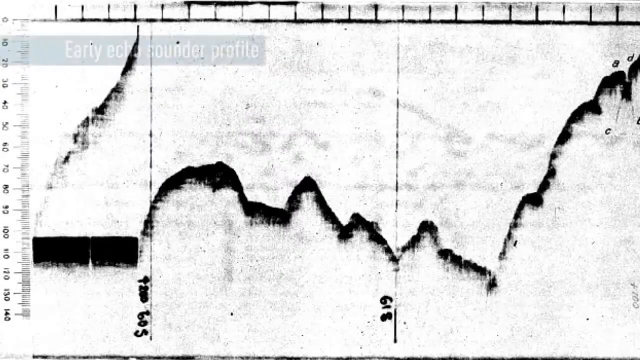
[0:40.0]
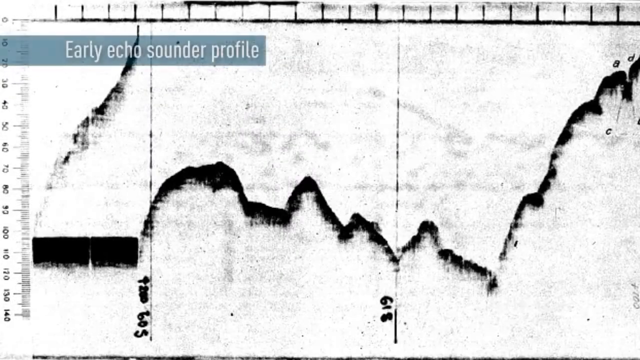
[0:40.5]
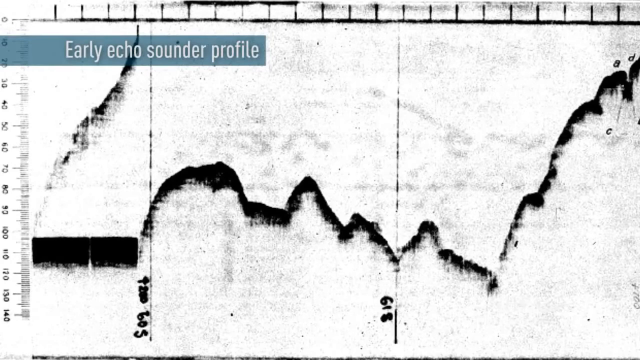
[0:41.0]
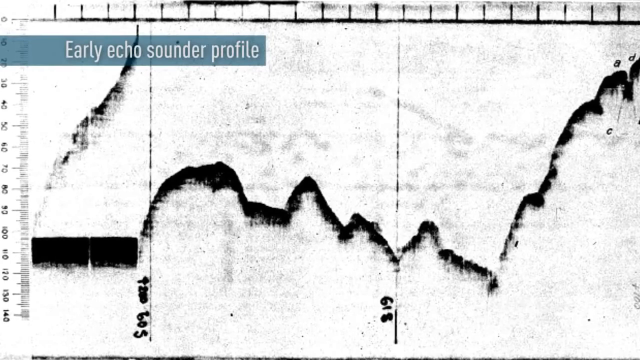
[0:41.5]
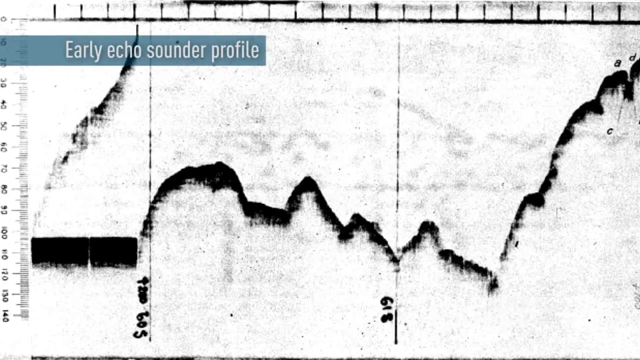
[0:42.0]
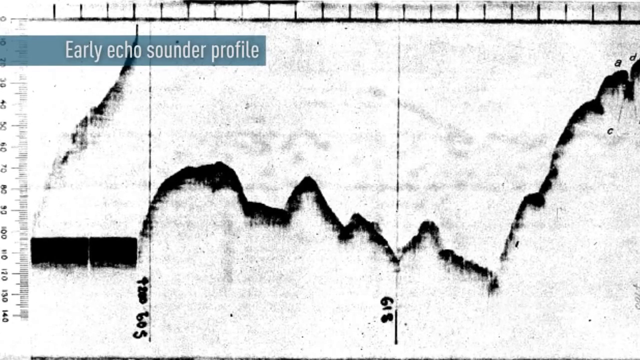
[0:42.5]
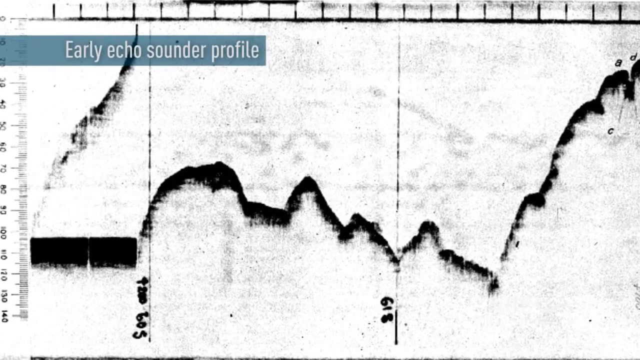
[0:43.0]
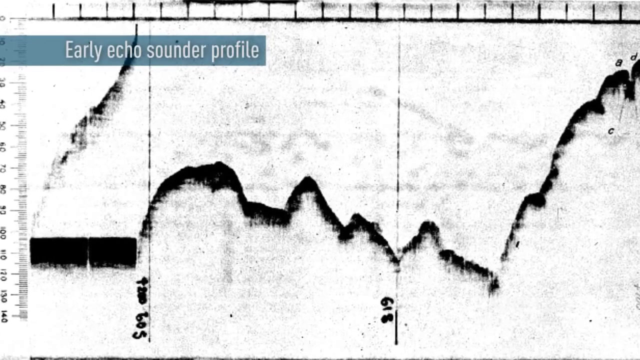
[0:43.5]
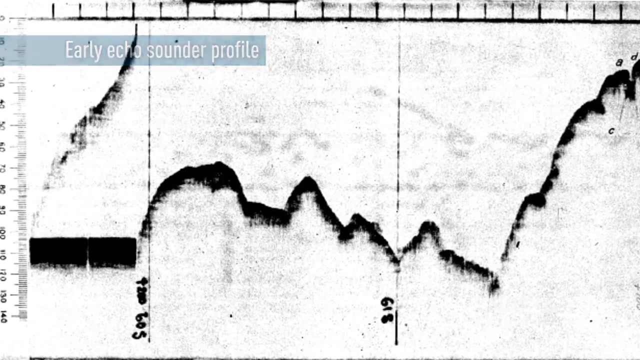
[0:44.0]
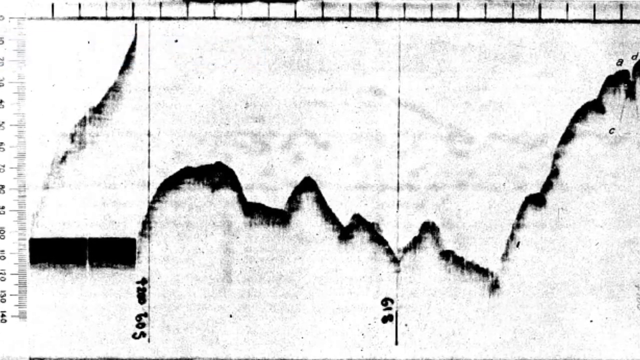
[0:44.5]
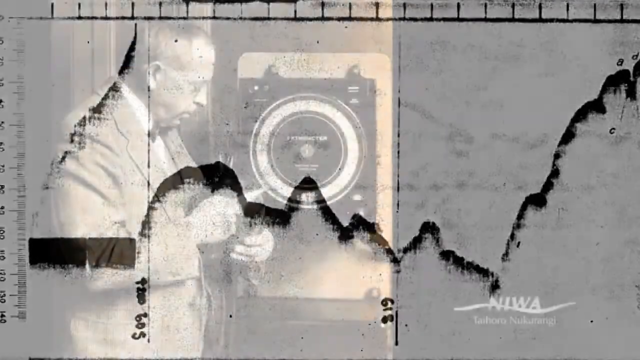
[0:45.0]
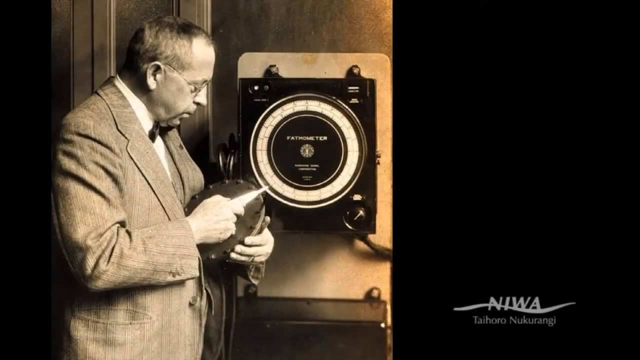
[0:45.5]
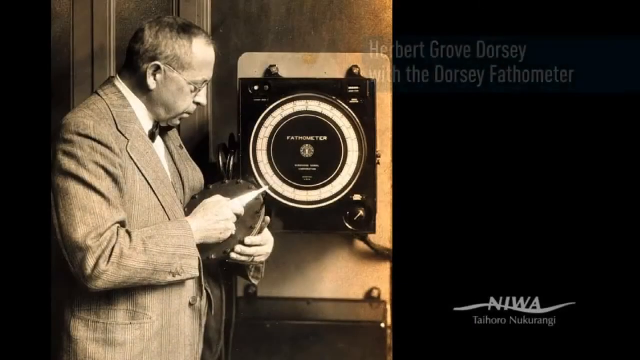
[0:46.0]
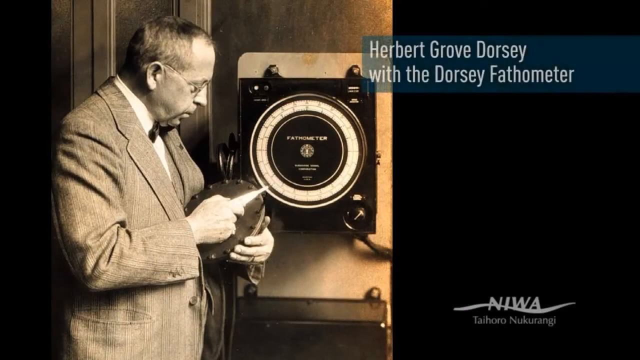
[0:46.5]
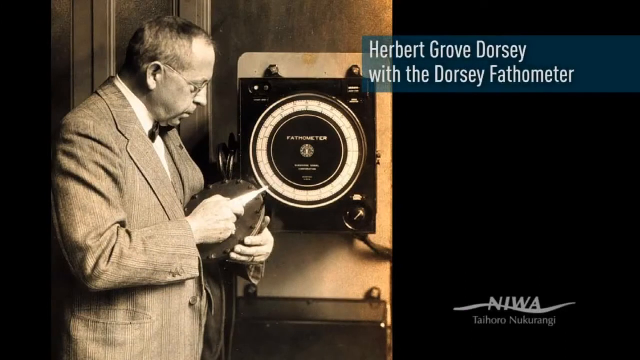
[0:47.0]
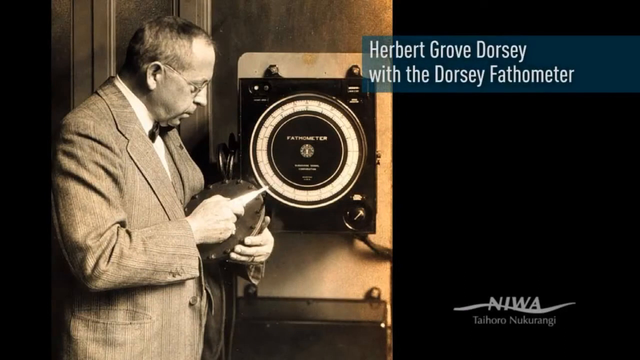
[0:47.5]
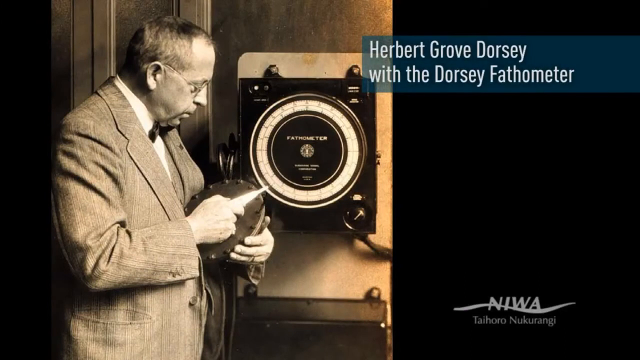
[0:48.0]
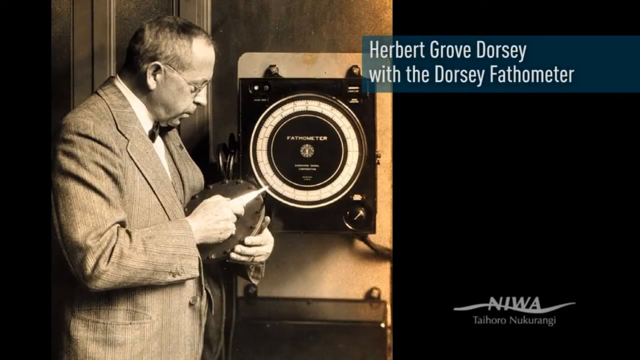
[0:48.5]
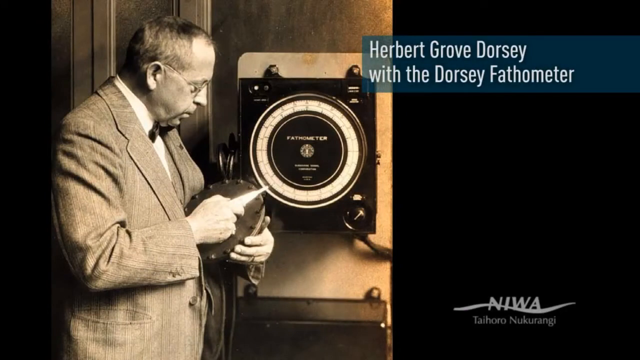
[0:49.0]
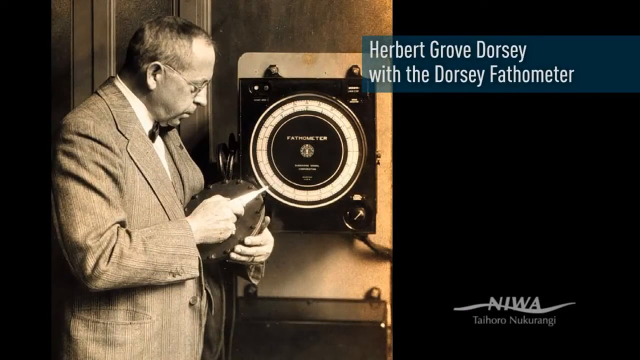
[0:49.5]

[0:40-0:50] An old black and white image appears, and a caption on it reads "Early Echo Sounder Profile". On the very left-hand side of the image is a ruler, and a line traverses across the page like a graph. The next shot shows an image of a man standing next to a machine mounted on the wall. He wears a suit, a white shirt and possibly a bow tie, along with glasses, and has short, slightly receding hair. He has a machine in his hands, and a caption on the image reads "Herbert Grove Dorsey with the Dorsey Fathometer". The machine attached to the wall appears to be rectangular and black, and on its very front is a circular feature that may contain numbers used for recording.